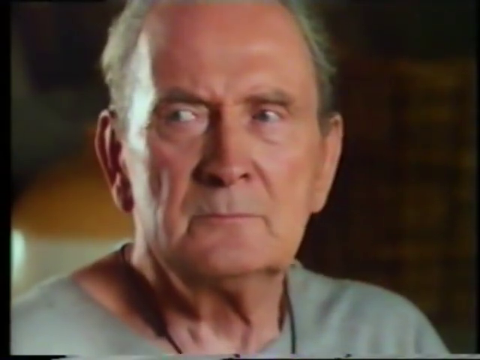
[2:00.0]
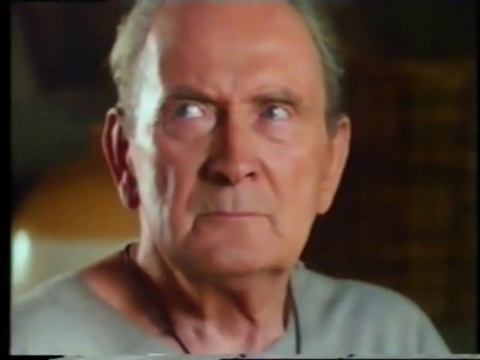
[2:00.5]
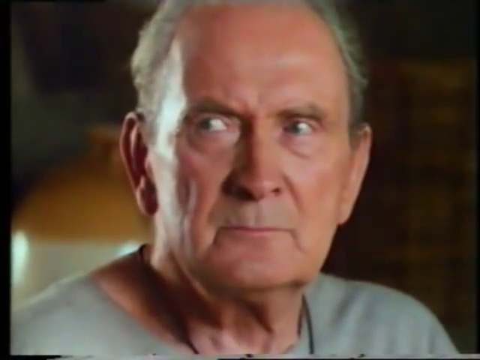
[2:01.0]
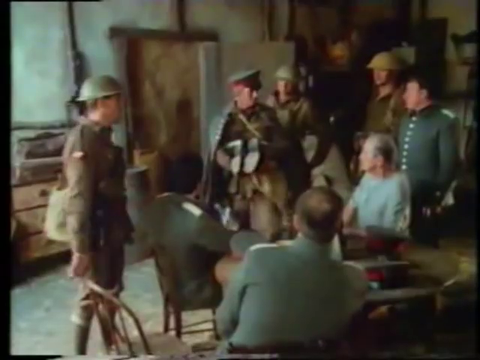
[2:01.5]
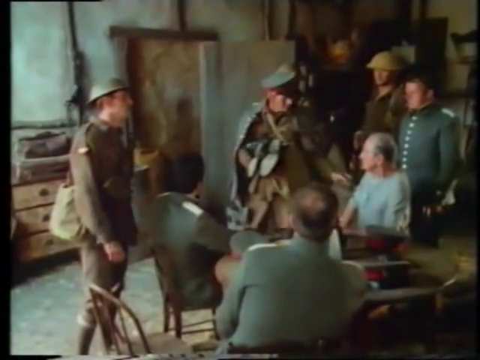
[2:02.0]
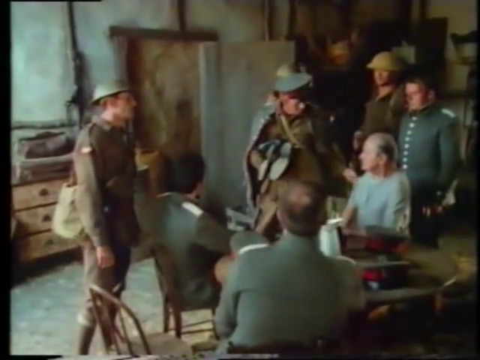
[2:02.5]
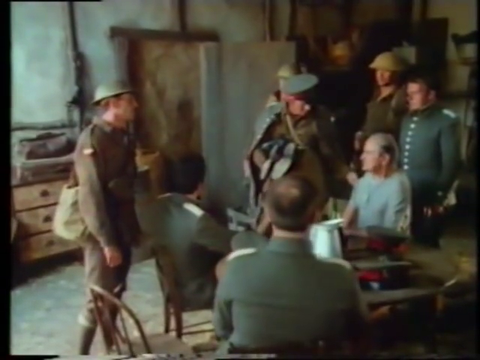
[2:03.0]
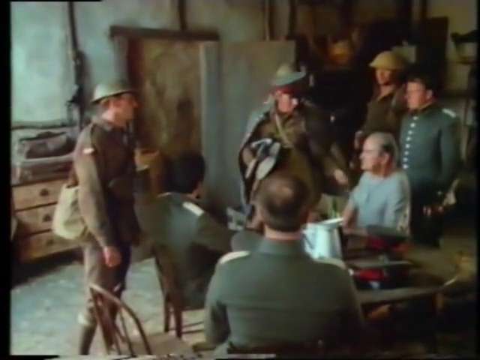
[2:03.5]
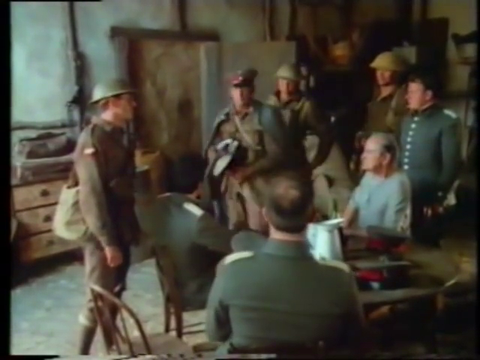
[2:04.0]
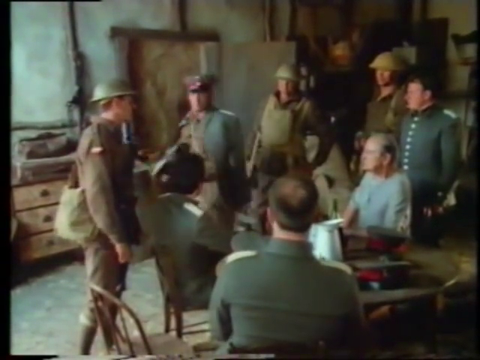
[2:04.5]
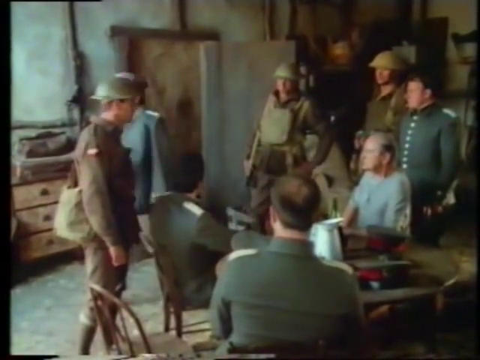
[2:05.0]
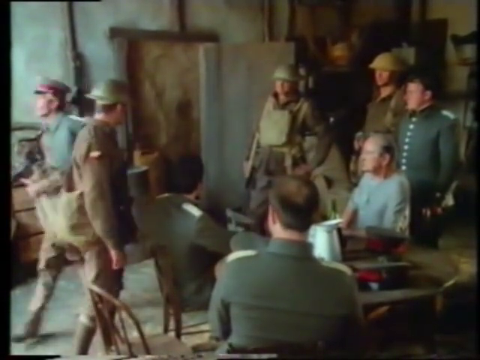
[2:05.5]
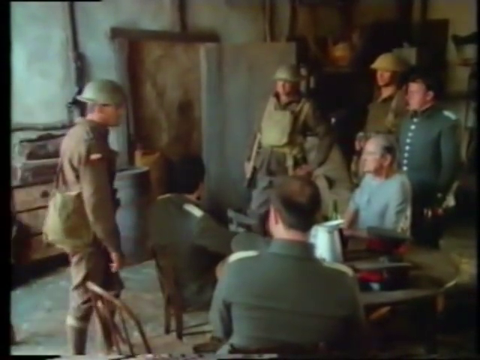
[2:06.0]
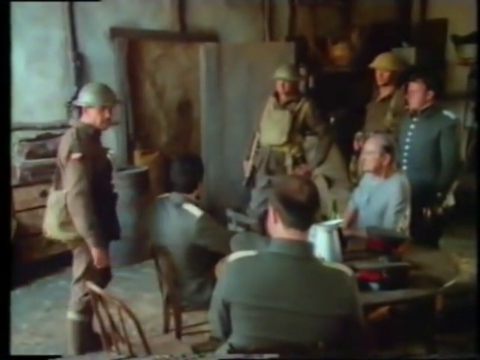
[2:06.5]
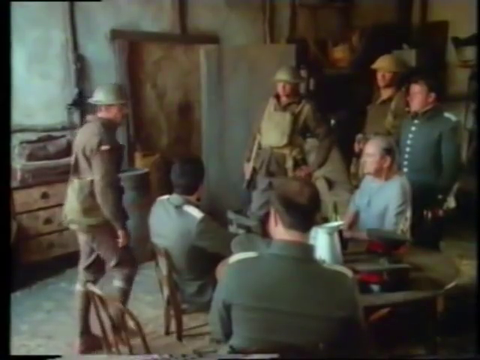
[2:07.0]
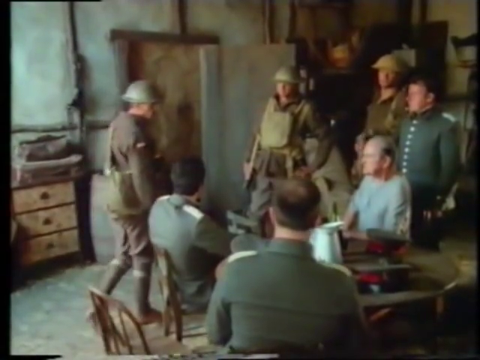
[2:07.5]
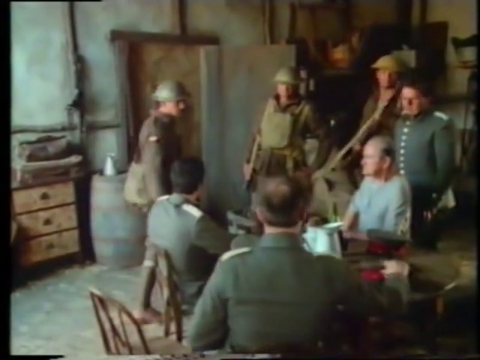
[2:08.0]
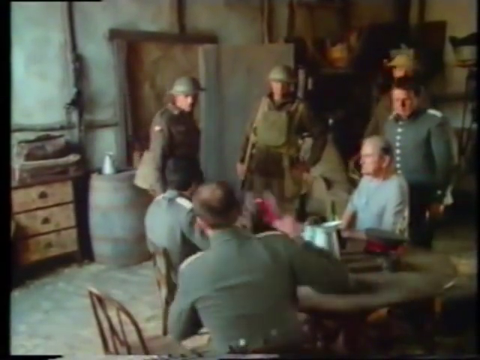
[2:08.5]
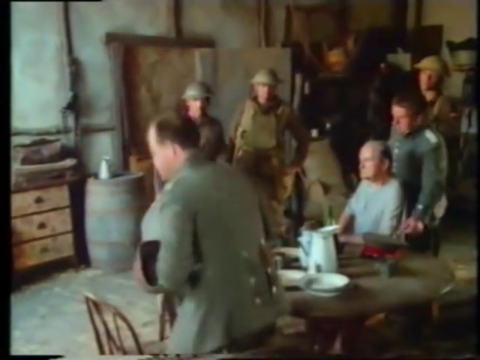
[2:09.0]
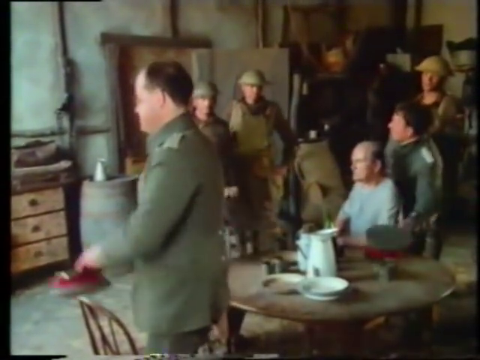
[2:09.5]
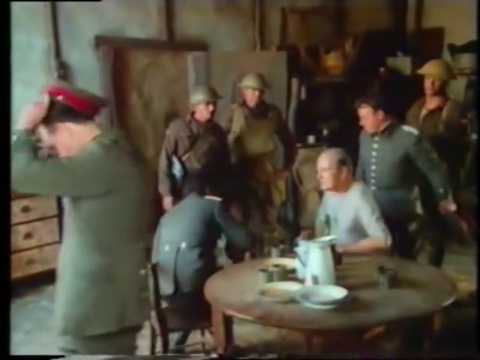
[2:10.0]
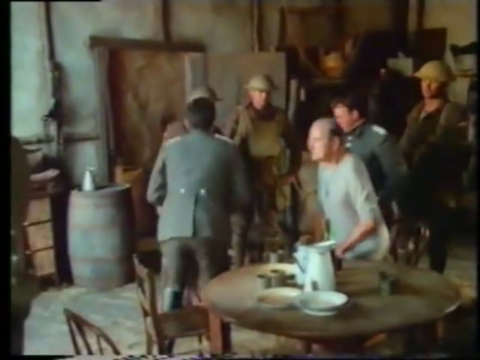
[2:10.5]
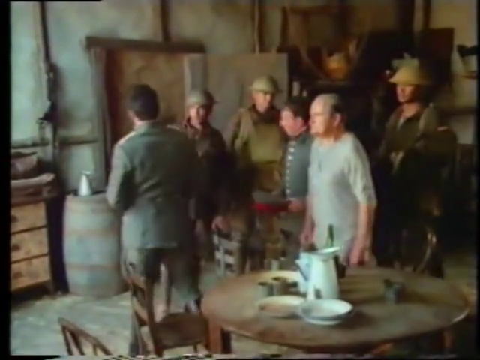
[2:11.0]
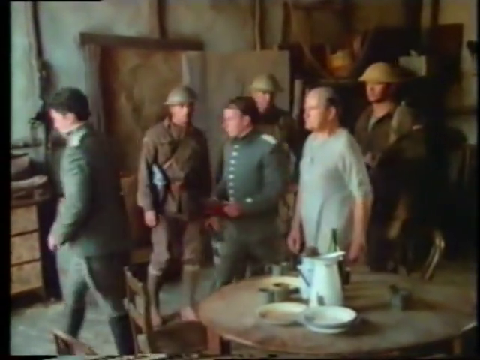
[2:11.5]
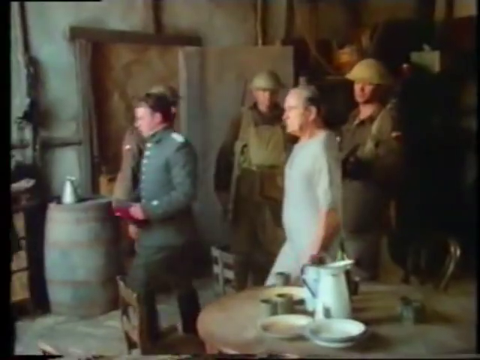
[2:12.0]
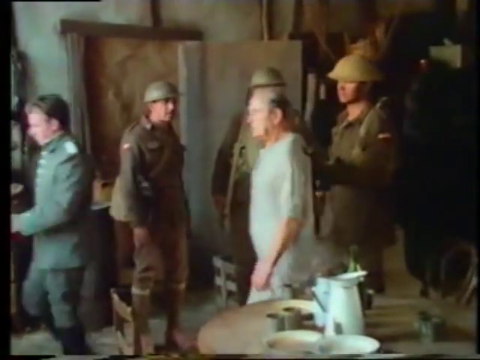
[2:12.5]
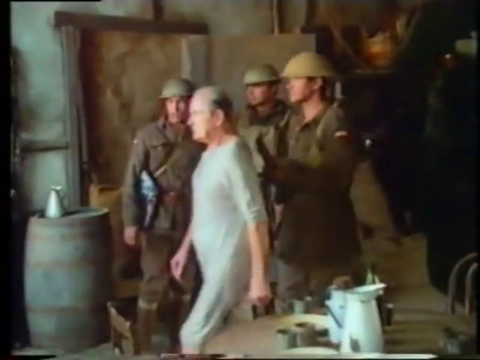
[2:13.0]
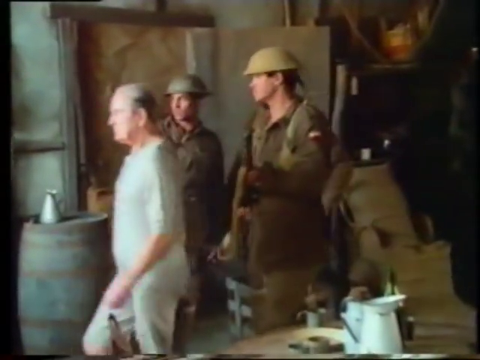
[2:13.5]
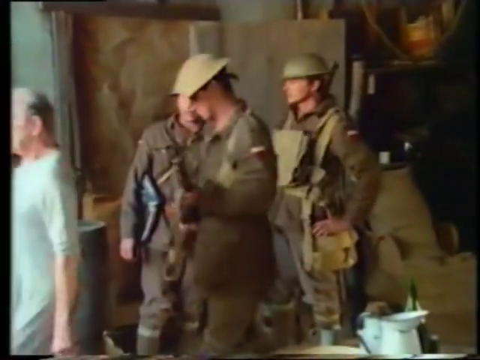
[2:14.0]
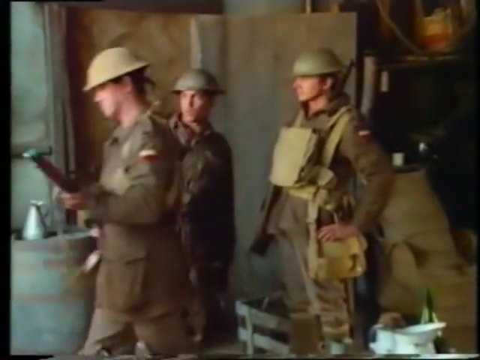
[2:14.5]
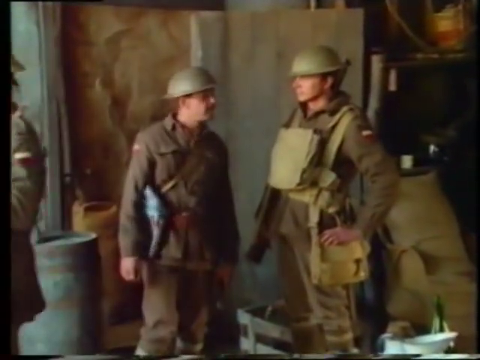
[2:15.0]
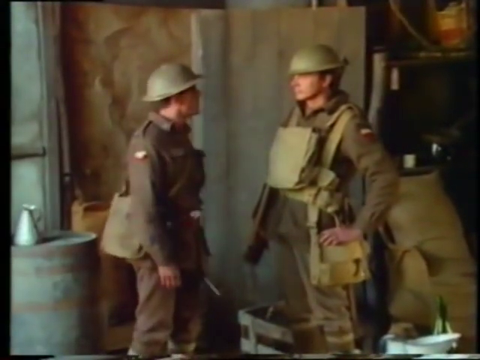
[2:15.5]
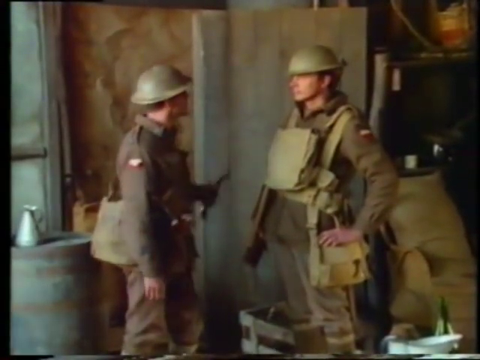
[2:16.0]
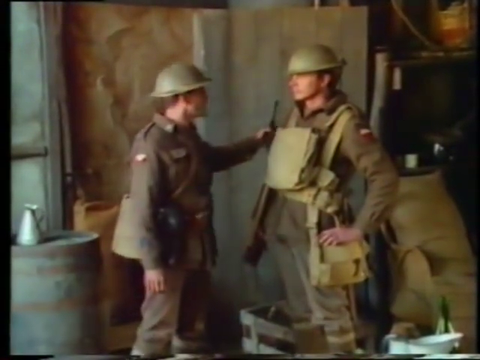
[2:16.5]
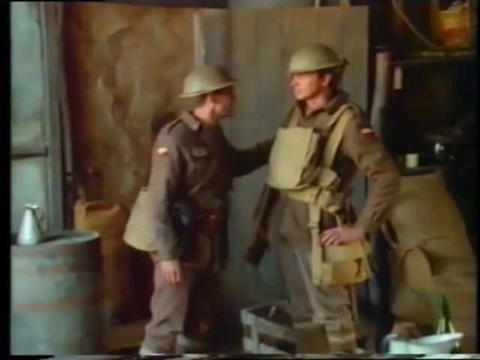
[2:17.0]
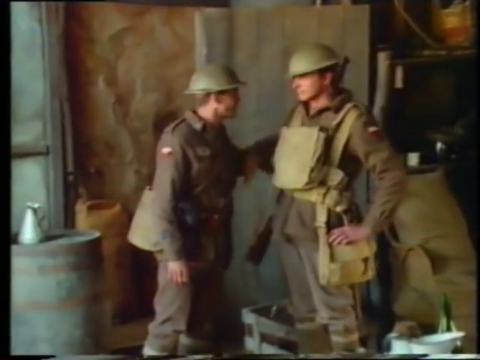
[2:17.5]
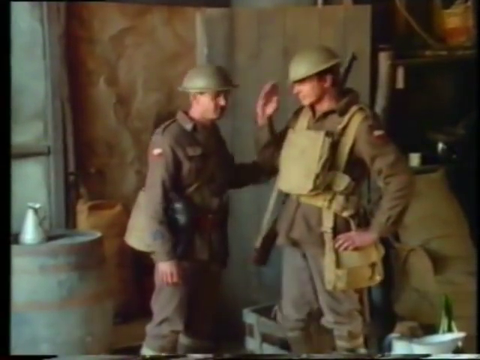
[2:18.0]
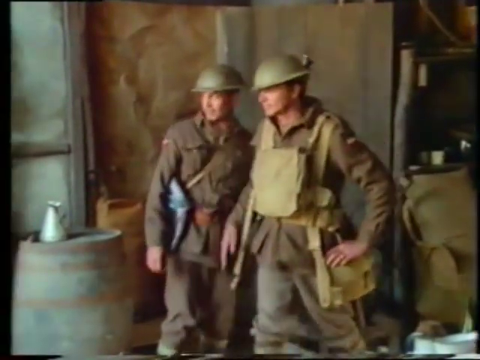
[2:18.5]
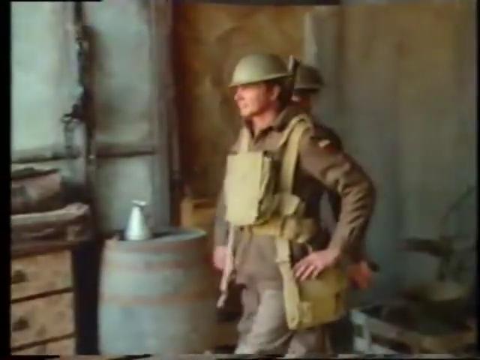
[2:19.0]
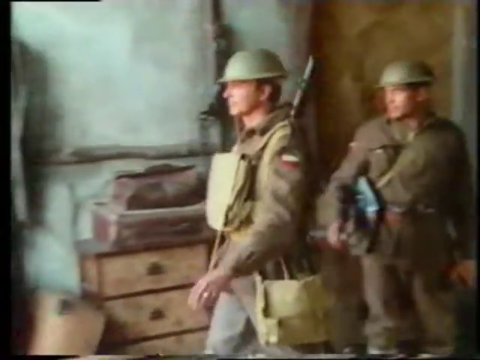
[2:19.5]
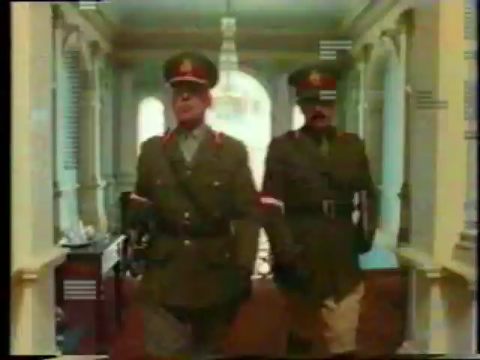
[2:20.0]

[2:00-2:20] An old-looking man with grey hair sits with a group of military men; one comes closer, taps him on the shoulder and walks away. Another picks up his cap from the table and walks away, and the old man stands up to follow him. Another man with a gun also goes away with him. In another scene, a group of armed men in the jungle take position, aiming to shoot, while another group of men hold beers and alcoholic drinks; some raise their hands and some have fumes on their faces. In another scene, a man talks into a telephone with his legs on a chair, bending toward the table. Another man brings in a kettle filled with hot water and pours tea into a teacup. The other man moves around to the right-hand side of the table, sits on the chair, drops his cup of tea and starts to open a book as they have a conversation. Next, the men in the jungle aim at their target, and one man comes from behind and points a gun at the head of one of the members. In another scene, a military man sits in the grassland while two other military men come from behind, point a gun at his head and take away his gun.